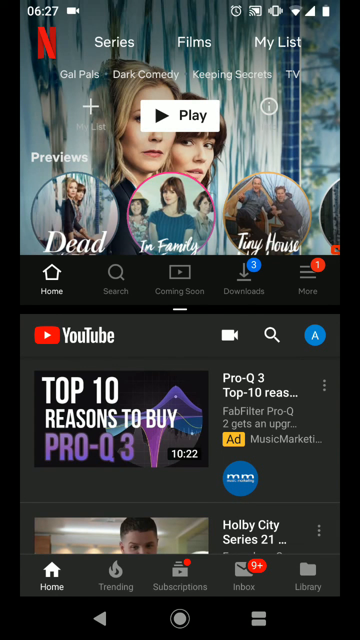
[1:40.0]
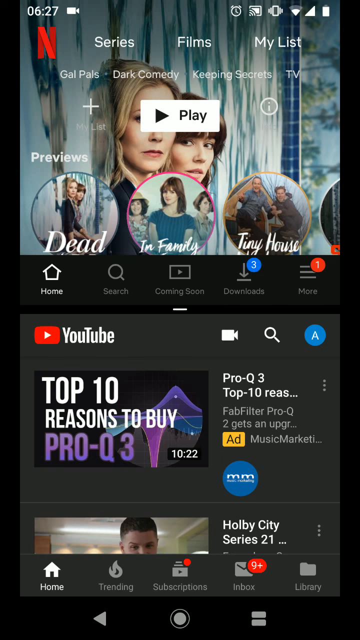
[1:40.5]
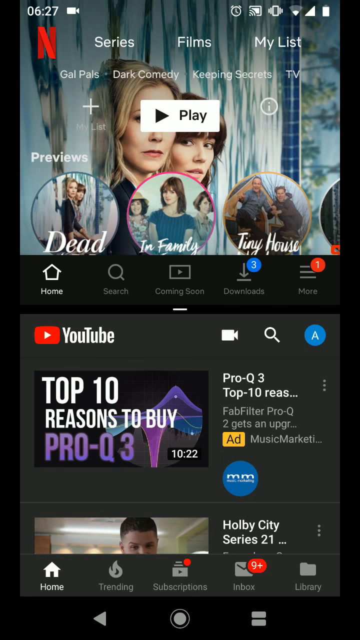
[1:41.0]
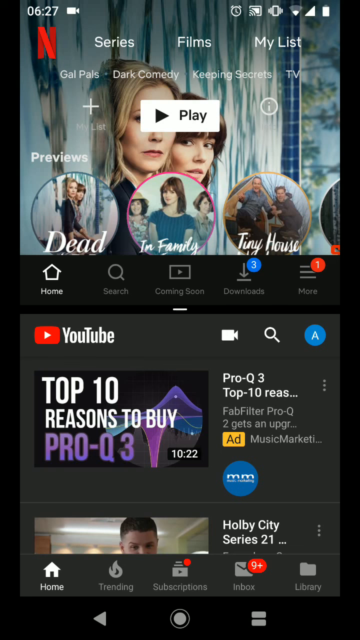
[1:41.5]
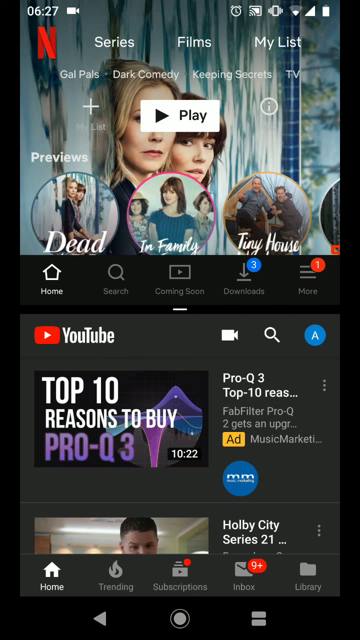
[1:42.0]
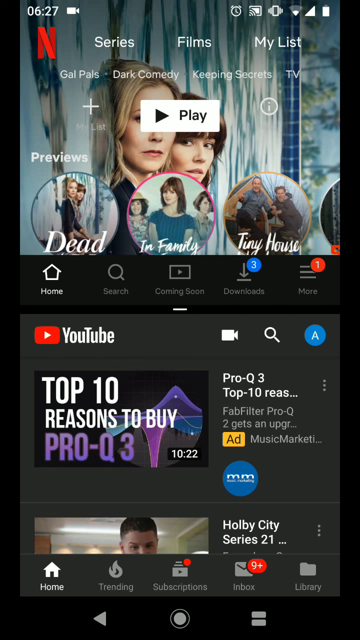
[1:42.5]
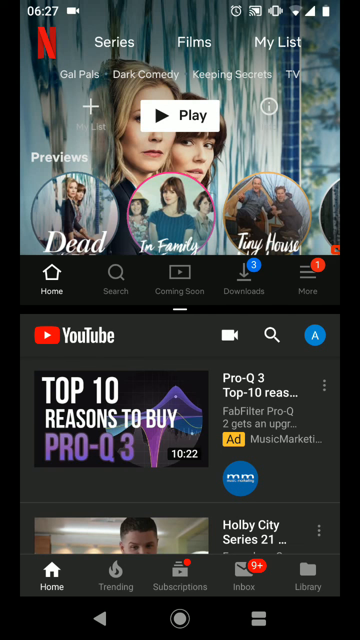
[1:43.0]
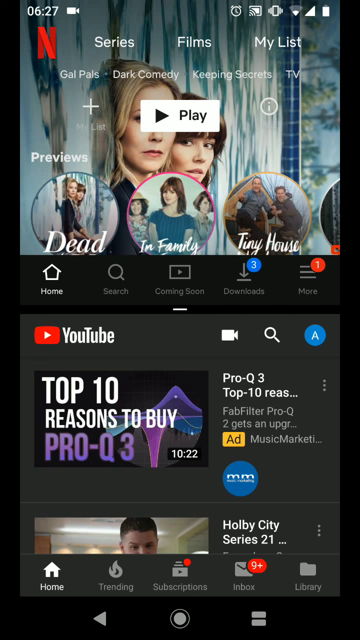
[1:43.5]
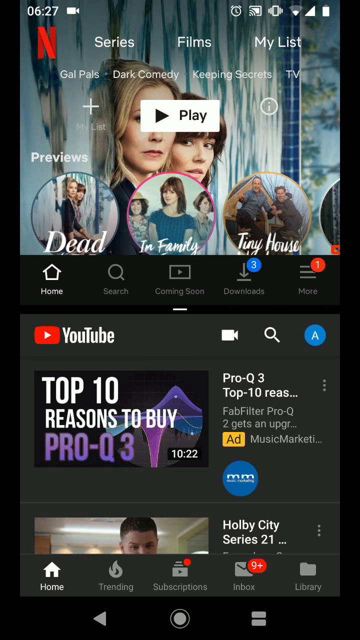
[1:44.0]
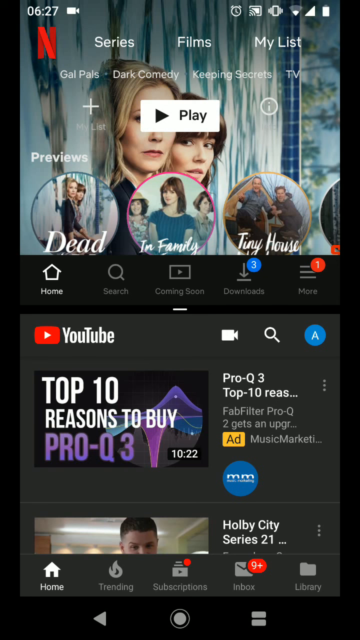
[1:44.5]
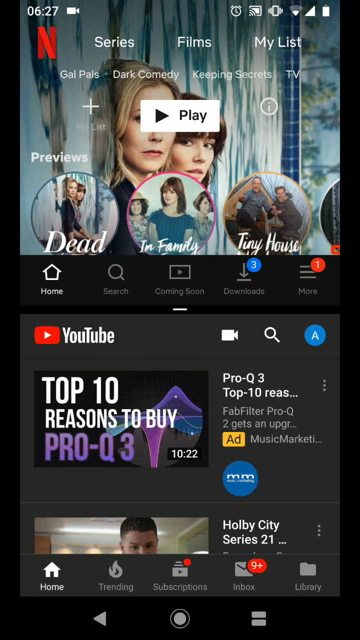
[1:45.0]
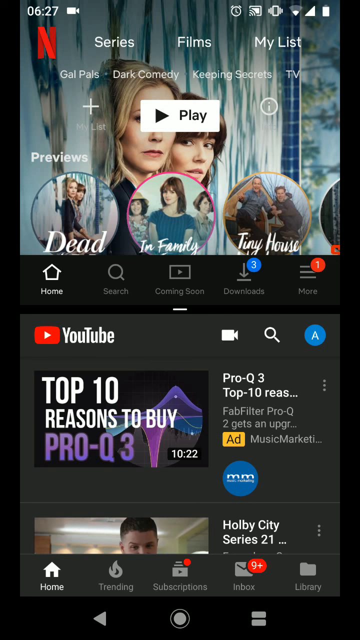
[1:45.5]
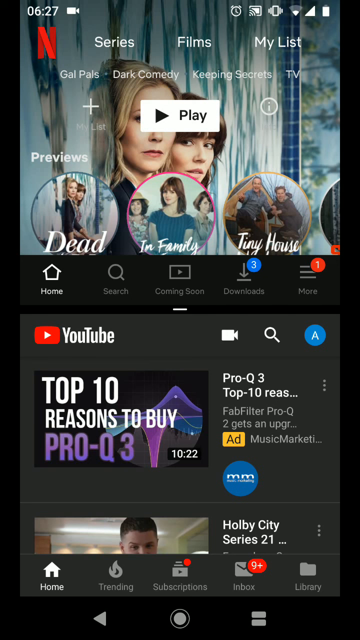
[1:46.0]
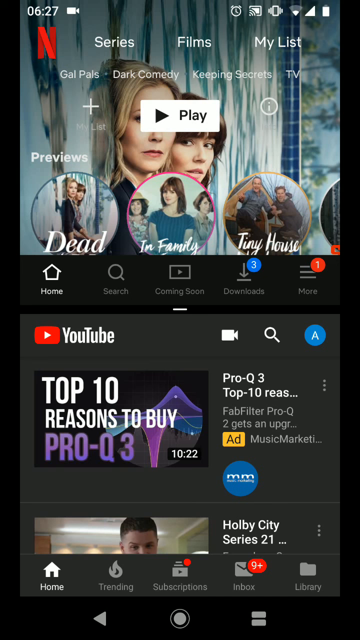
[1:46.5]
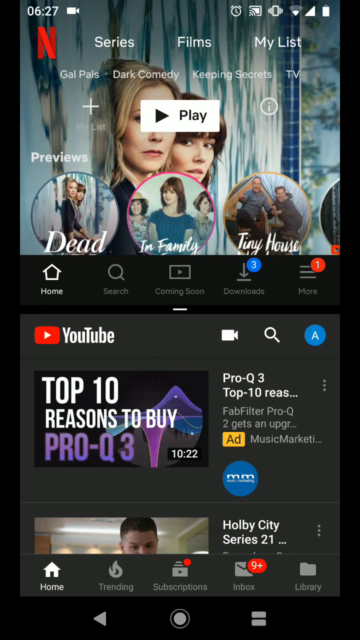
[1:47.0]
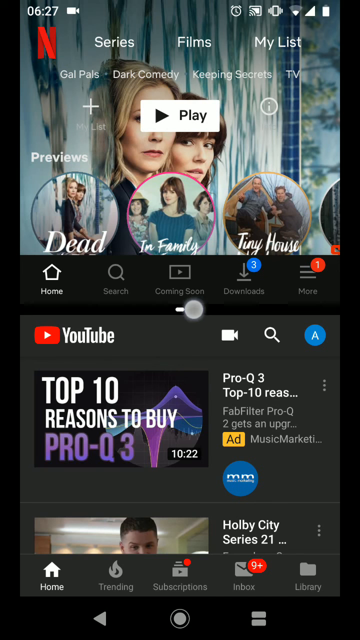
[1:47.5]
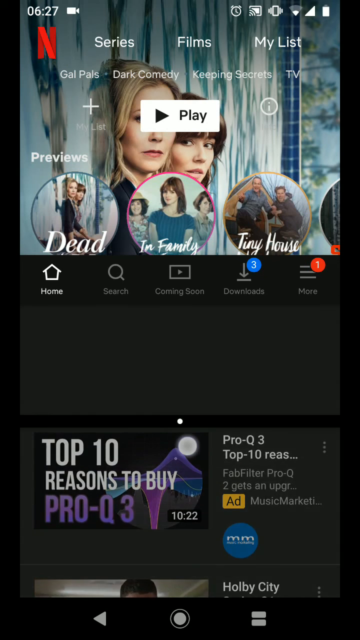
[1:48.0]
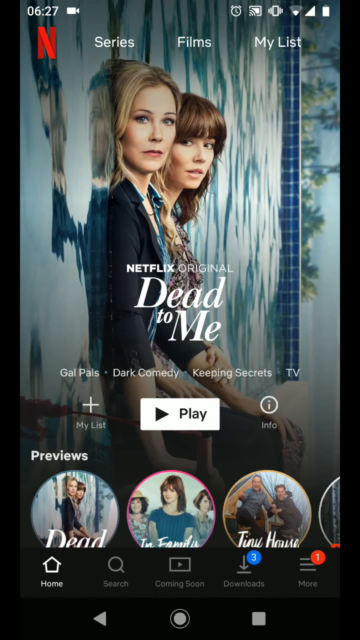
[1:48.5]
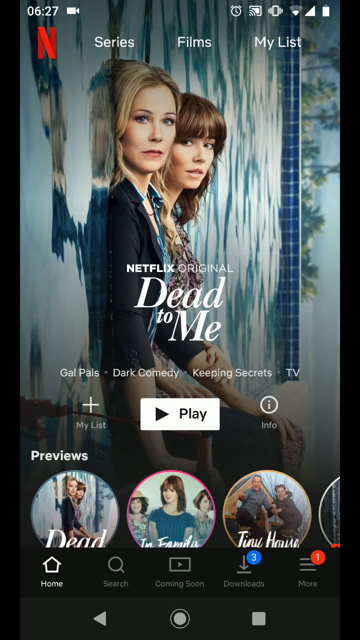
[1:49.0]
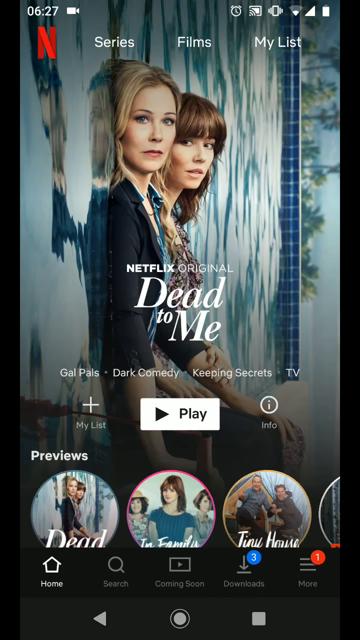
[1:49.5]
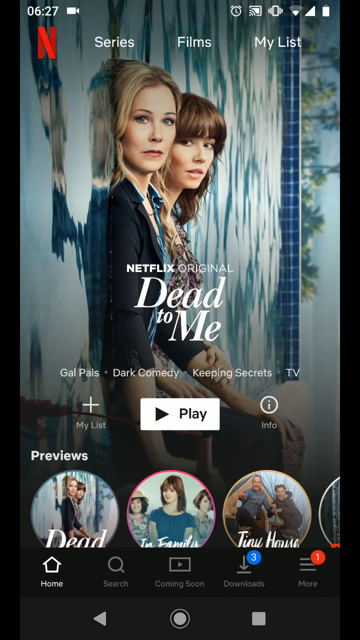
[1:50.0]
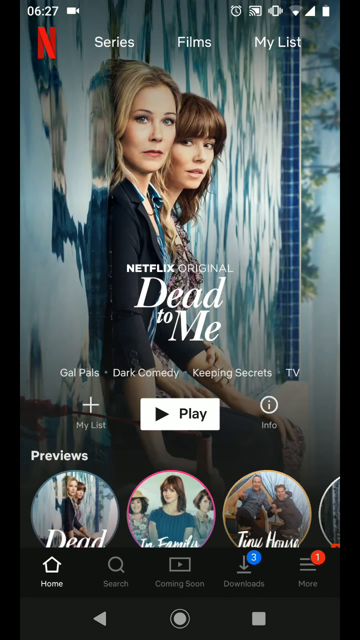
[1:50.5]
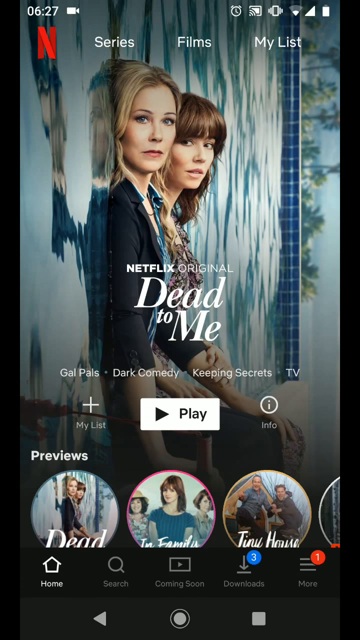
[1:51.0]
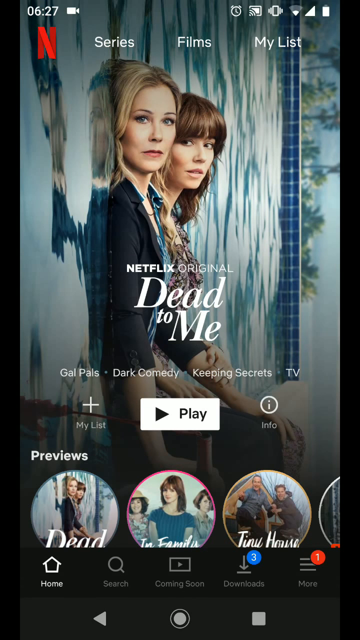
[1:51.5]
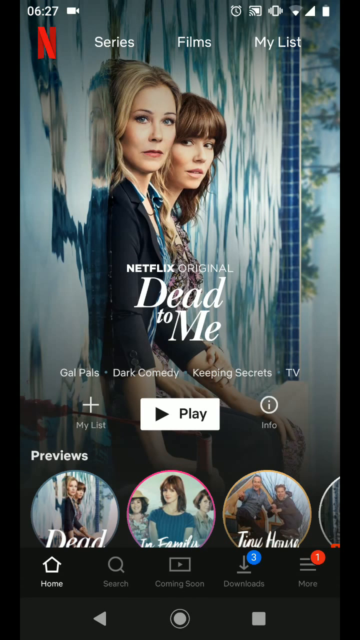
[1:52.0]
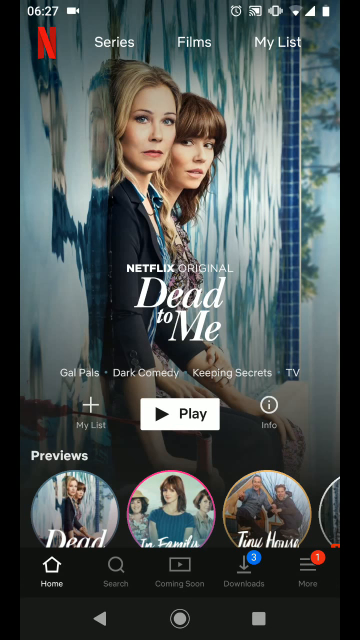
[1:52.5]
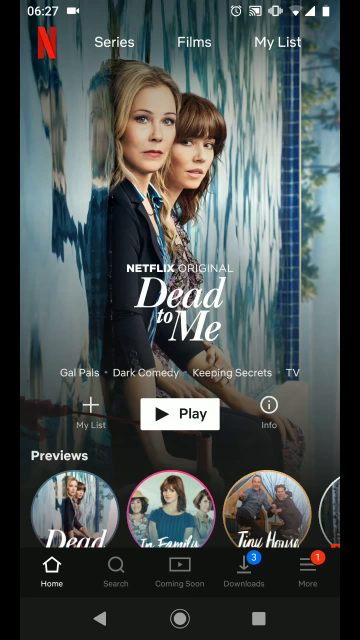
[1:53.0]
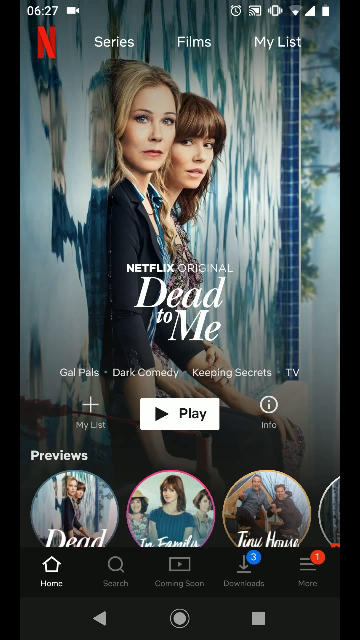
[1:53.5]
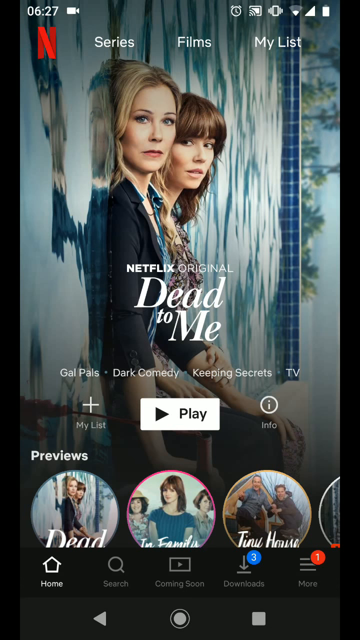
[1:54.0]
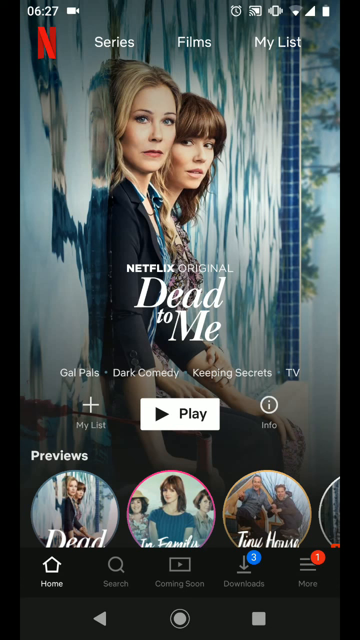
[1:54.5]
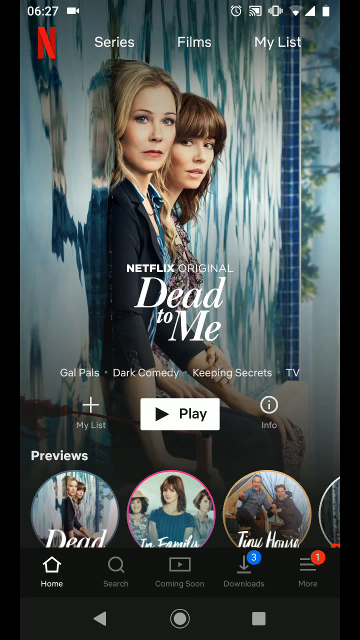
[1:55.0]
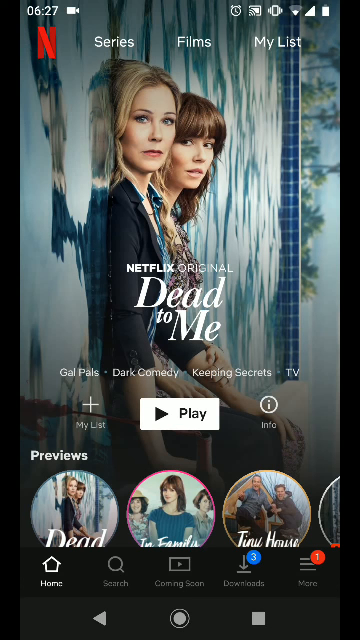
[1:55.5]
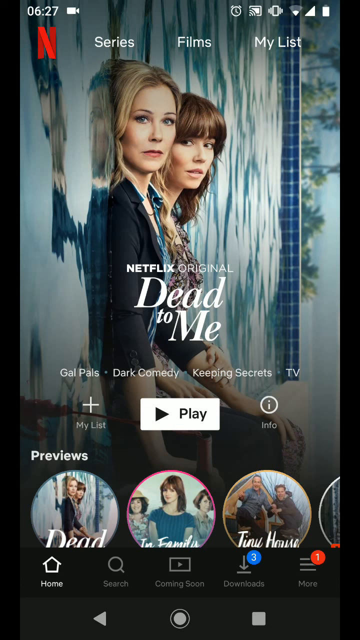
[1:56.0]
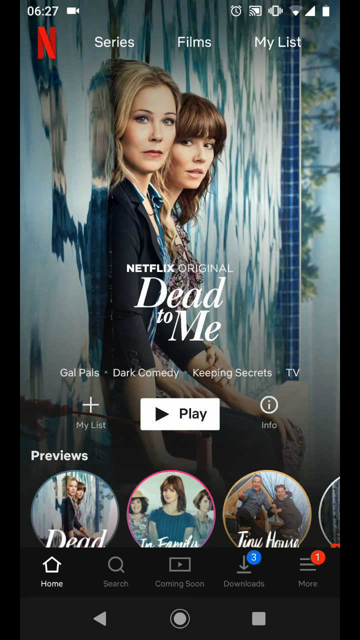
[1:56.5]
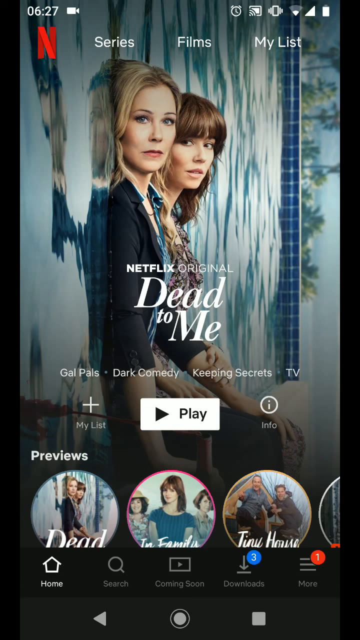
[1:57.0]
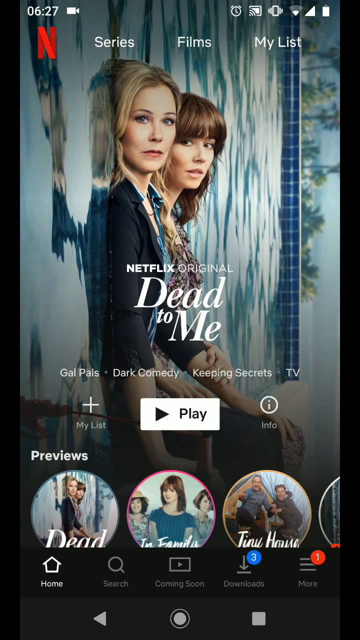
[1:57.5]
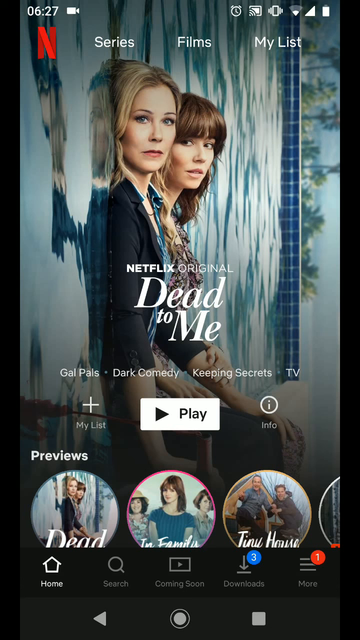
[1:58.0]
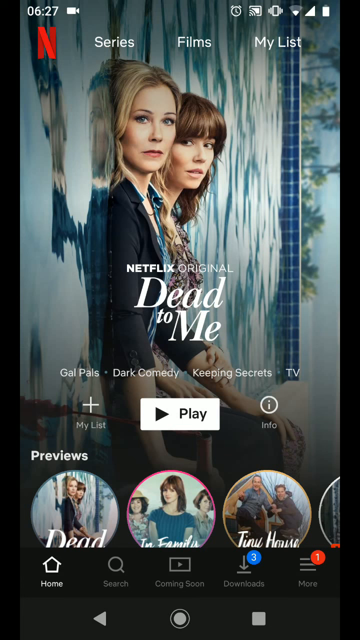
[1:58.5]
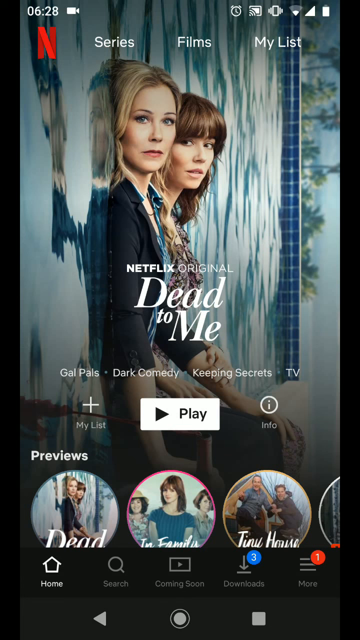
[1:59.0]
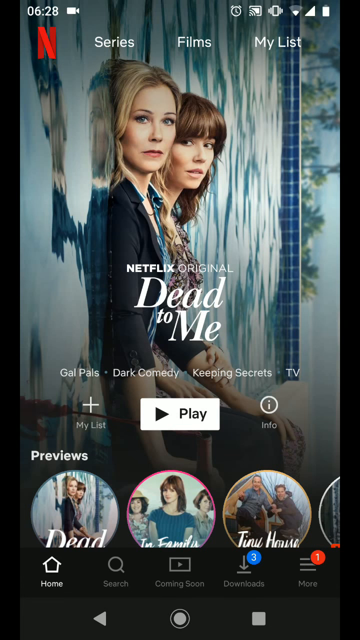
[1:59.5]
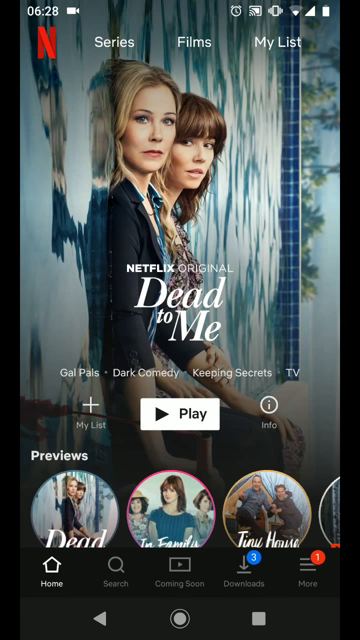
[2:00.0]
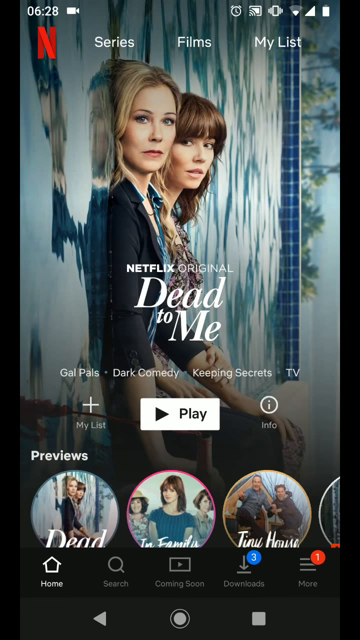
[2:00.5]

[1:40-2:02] The screen shows Netflix alongside the YouTube page, now arranged so that more of the Netflix images are visible. The Netflix page still shows the Netflix original Dead To Me in front with a play button, and the Netflix section also has preview, a home icon, a search icon, a download section and more. The YouTube section shows a video titled "top 10 reasons to buy the Pro Q3", which is not clicked. Both screens are shown for a couple of moments, then the user drags down the Netflix portion to remove the split screen, leaving only Netflix, with its icon, series, films, my list and play. The video then fades out.